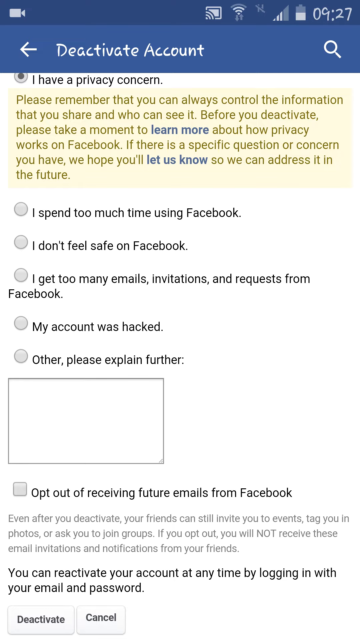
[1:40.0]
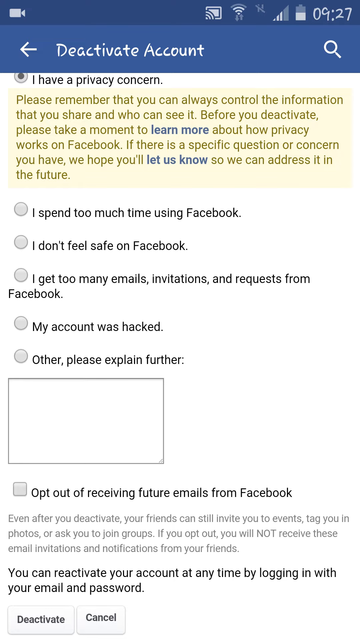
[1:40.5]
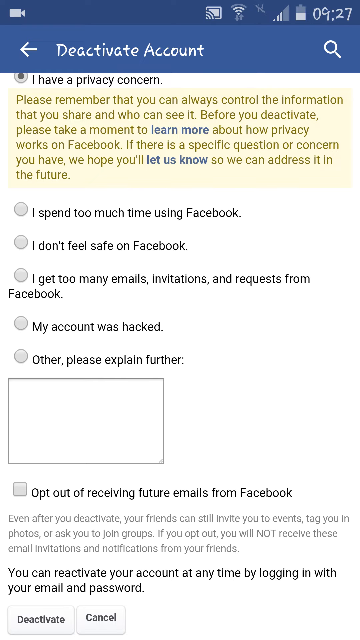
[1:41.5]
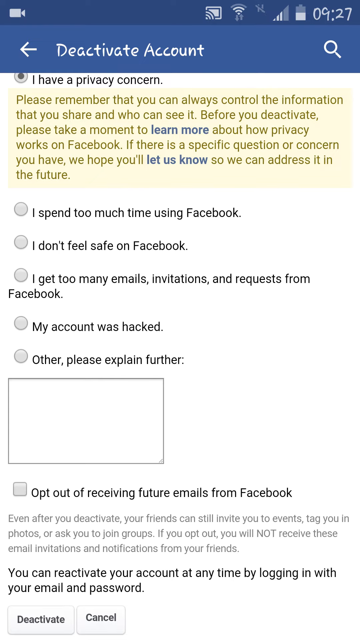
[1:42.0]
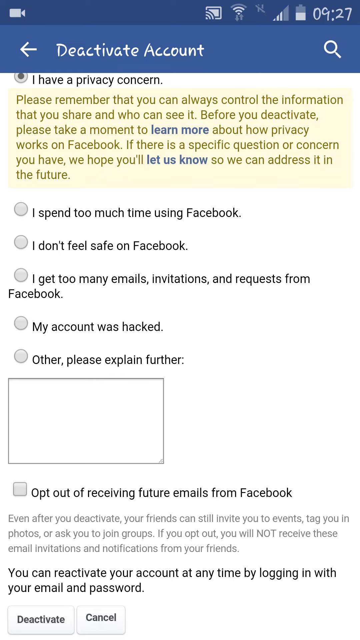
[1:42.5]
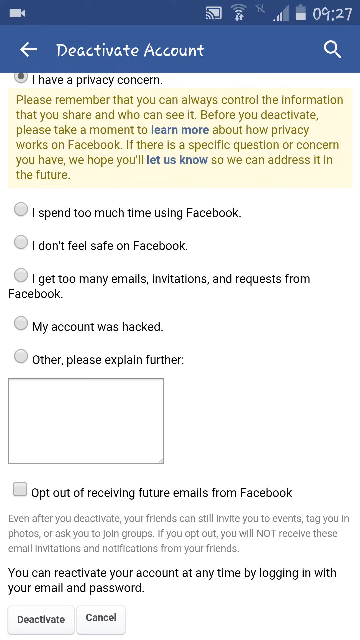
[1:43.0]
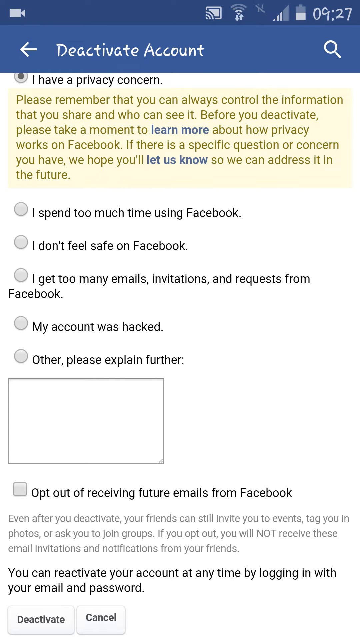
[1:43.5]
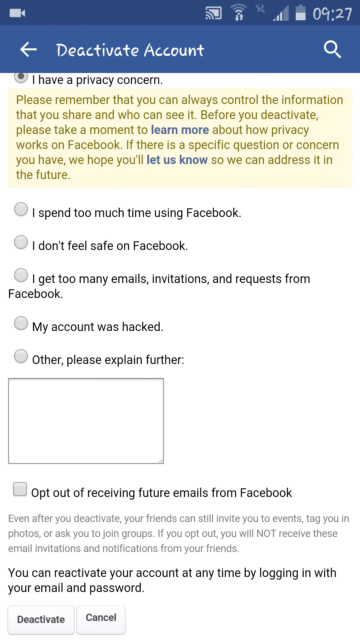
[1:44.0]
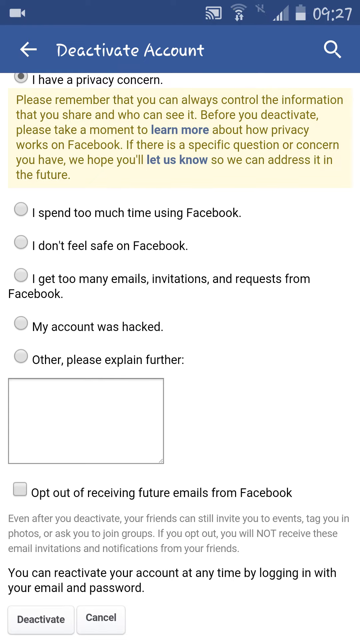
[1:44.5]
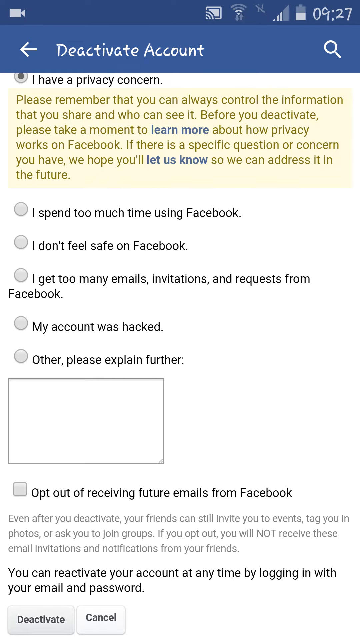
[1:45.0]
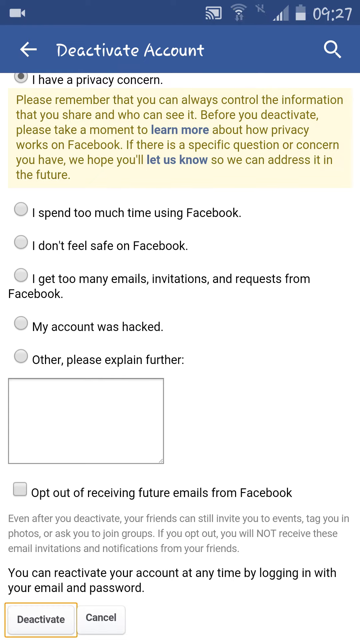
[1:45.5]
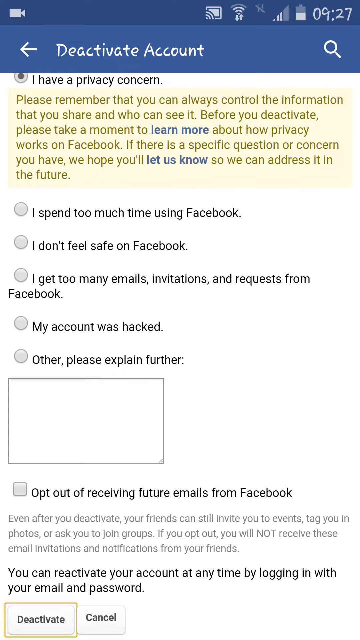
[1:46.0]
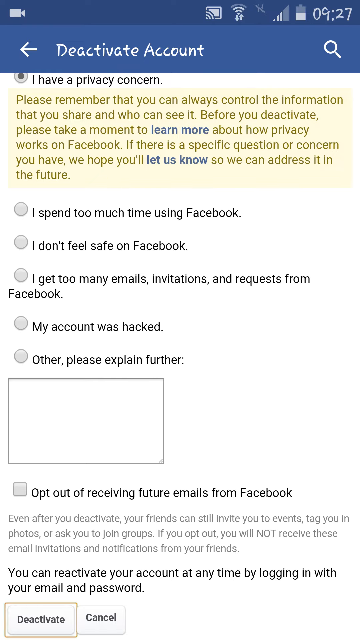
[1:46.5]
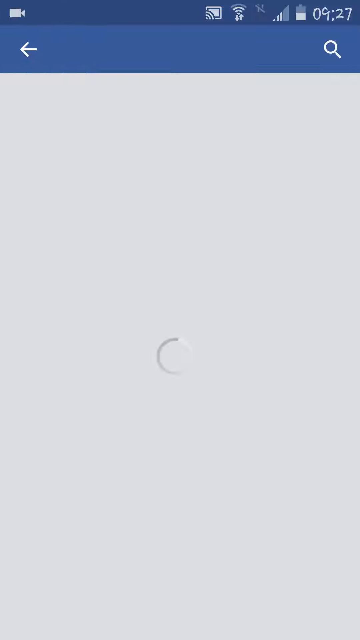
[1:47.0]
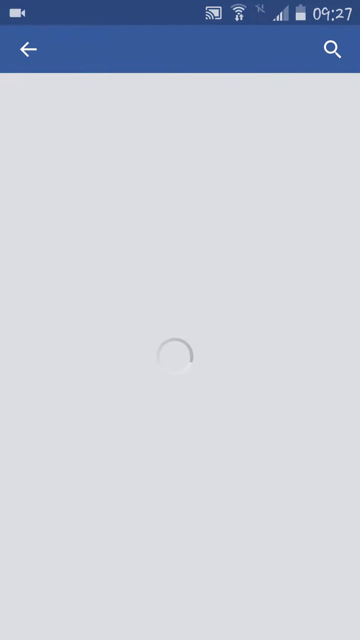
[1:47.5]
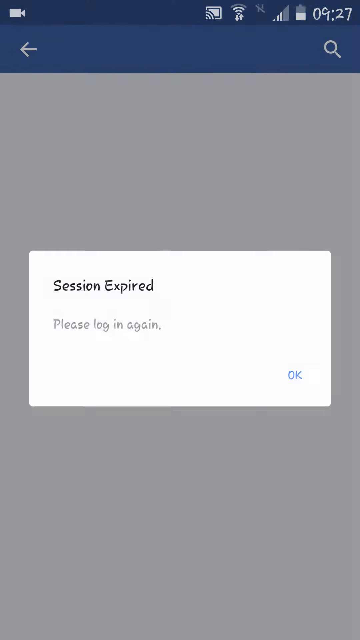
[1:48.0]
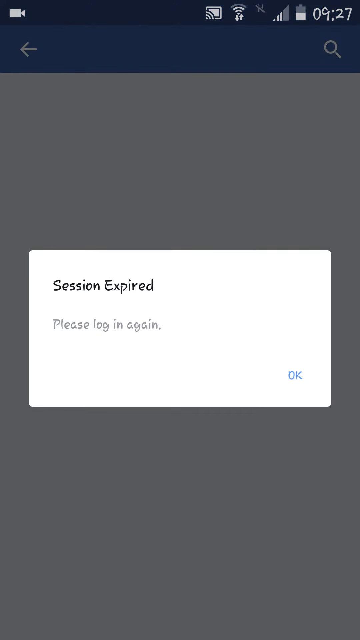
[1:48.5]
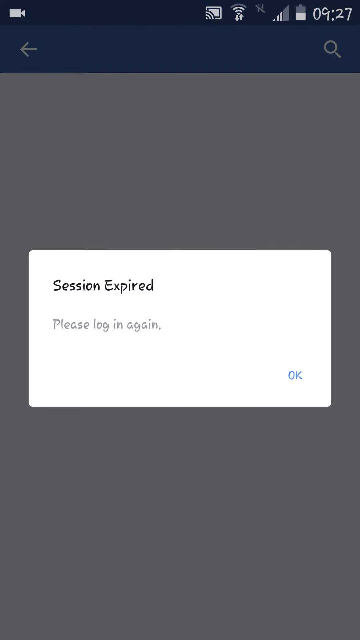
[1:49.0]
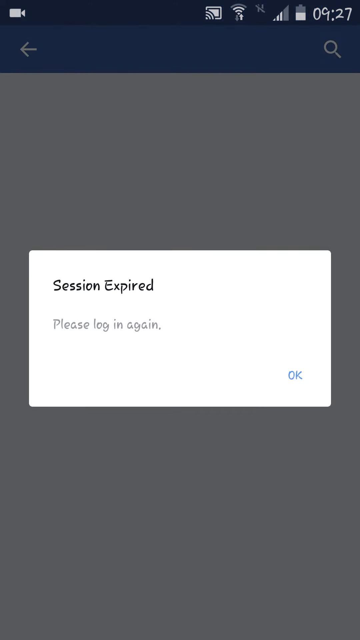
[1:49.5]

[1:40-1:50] In the Facebook app on a cell phone, a person trying to deactivate their account is on a screen labeled "Deactivate Account", with a back arrow pointing left in the top left of the screen. "I have a privacy concern" is chosen as the reason, and underneath it is text highlighted in yellow explaining what can be done about a privacy concern without deactivating the account. Below that is a list of other reasons for deactivating. The screen stays like this for a little while. At the bottom is a "Deactivate Account" button and another button that says "Cancel". It is not certain whether the deactivate button is pressed, but the screen then moves to another screen that says "Session Expired. Please log in again." The person apparently pressed the deactivate button. They go back to the original screen.